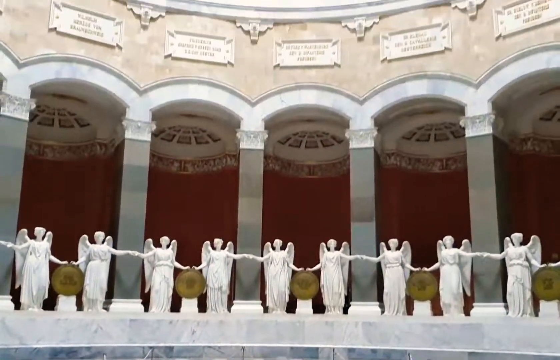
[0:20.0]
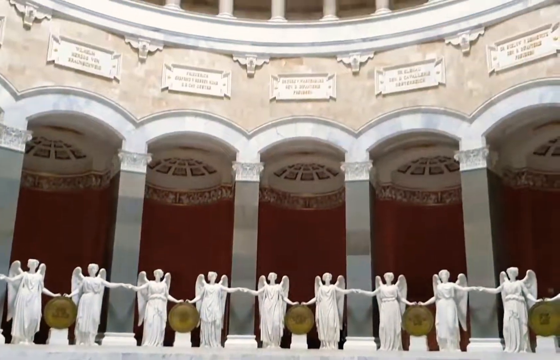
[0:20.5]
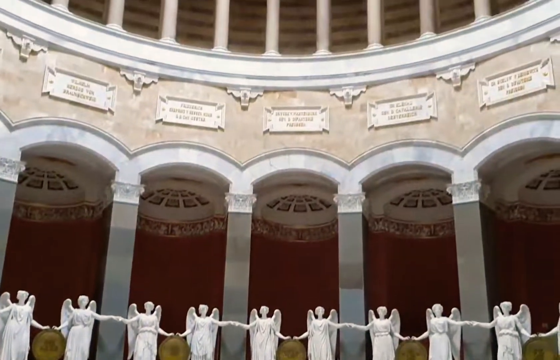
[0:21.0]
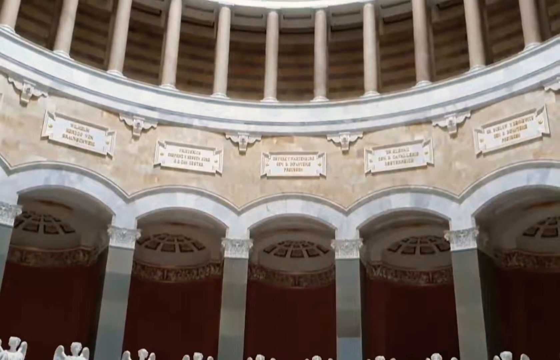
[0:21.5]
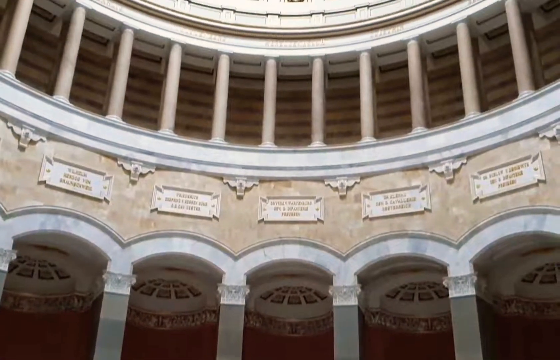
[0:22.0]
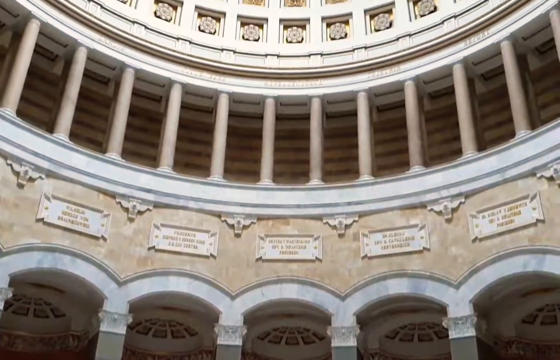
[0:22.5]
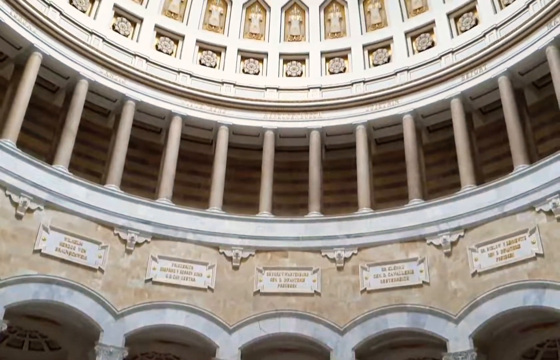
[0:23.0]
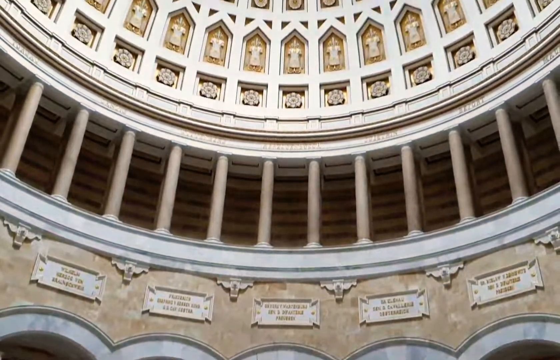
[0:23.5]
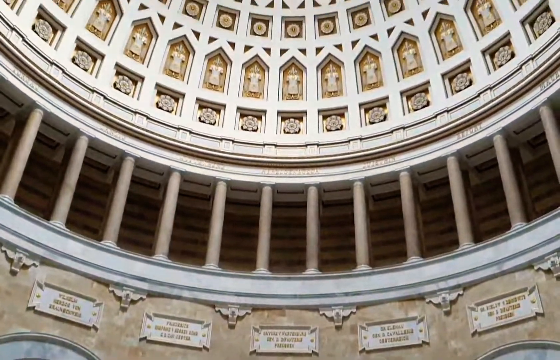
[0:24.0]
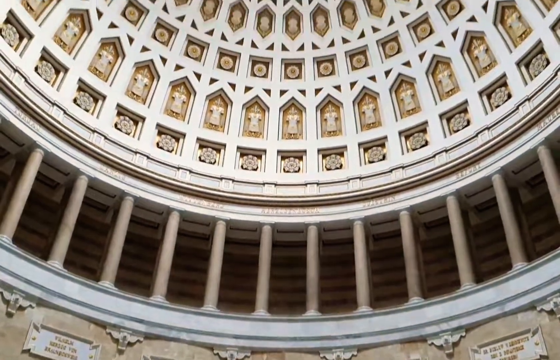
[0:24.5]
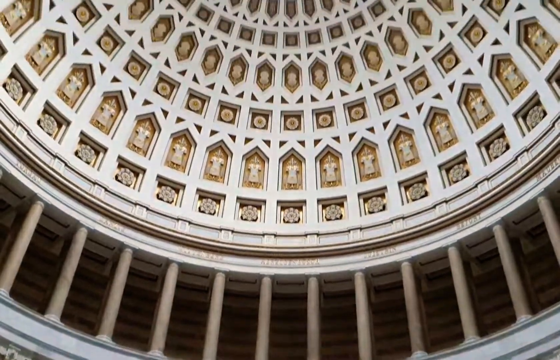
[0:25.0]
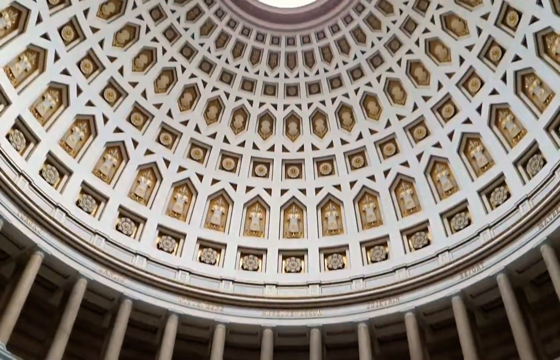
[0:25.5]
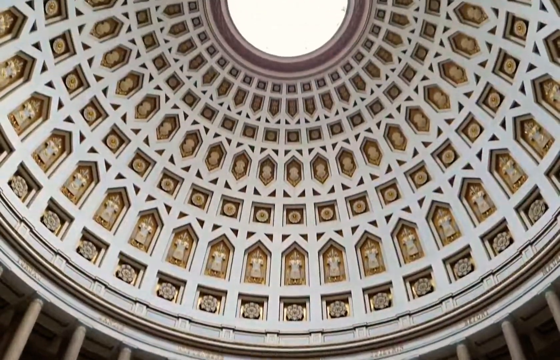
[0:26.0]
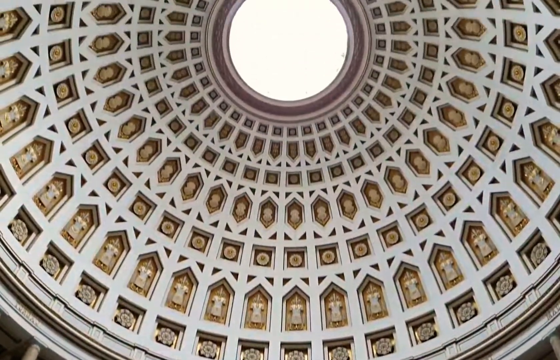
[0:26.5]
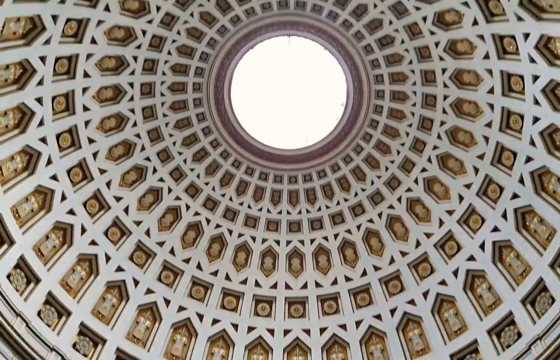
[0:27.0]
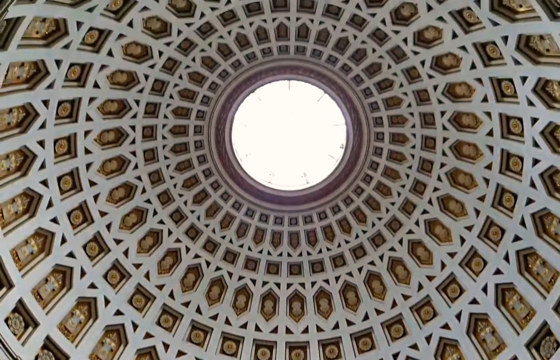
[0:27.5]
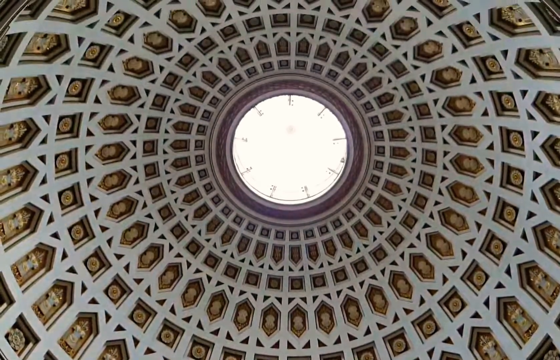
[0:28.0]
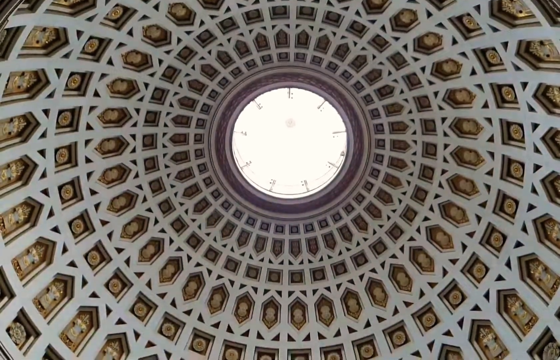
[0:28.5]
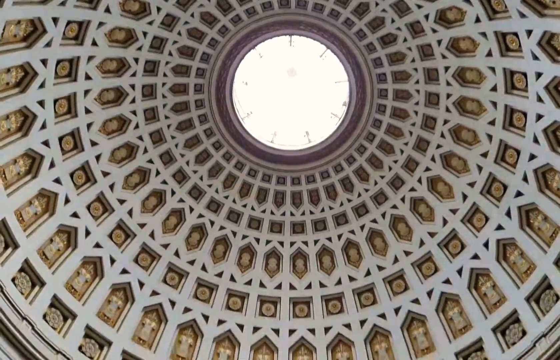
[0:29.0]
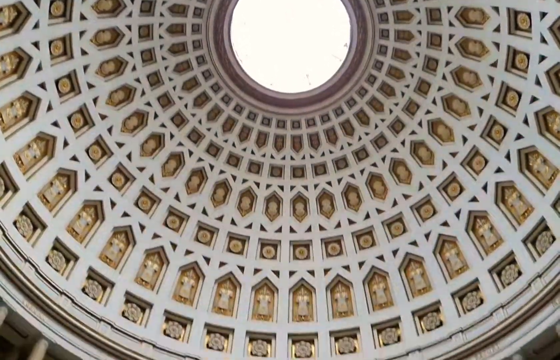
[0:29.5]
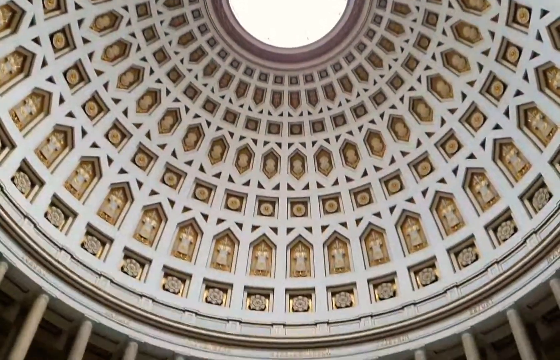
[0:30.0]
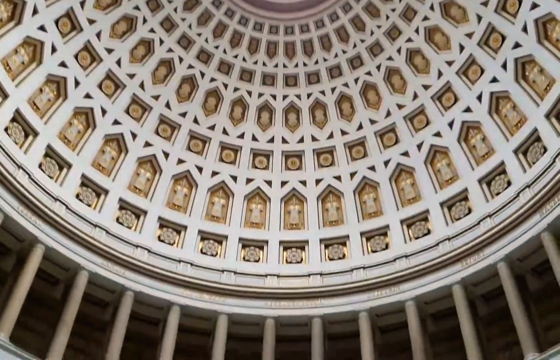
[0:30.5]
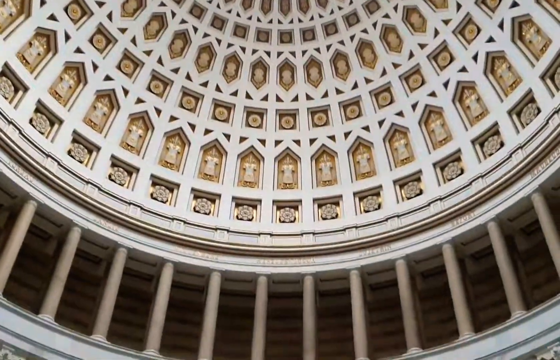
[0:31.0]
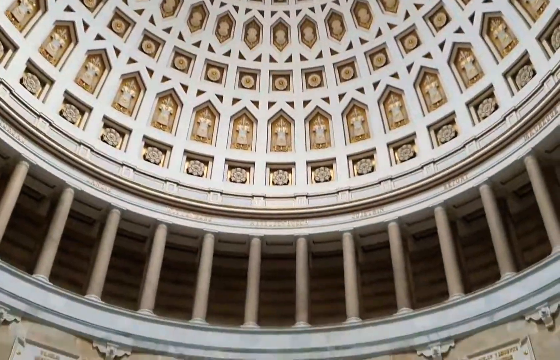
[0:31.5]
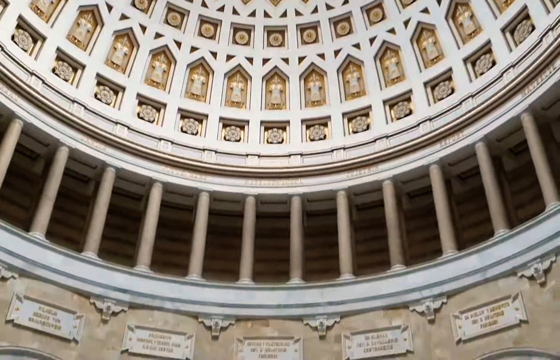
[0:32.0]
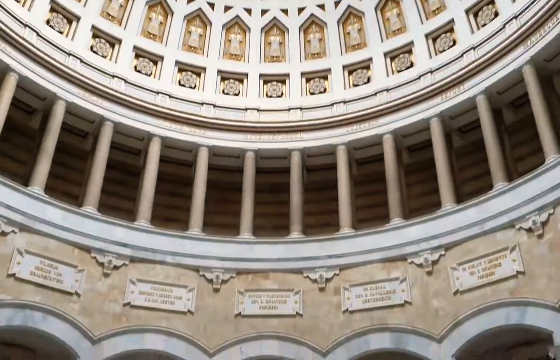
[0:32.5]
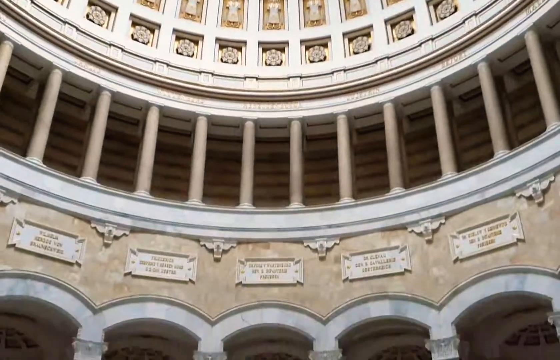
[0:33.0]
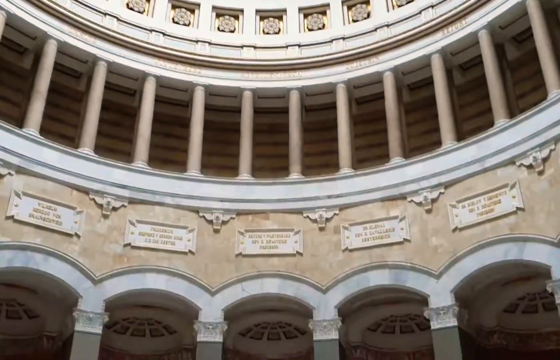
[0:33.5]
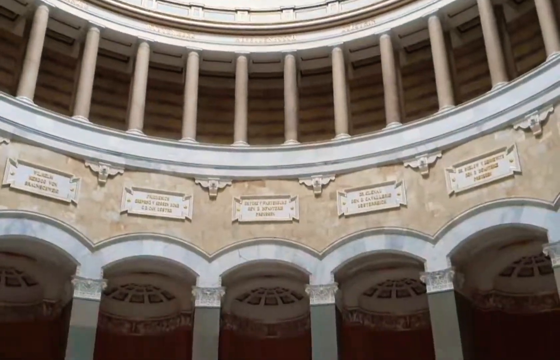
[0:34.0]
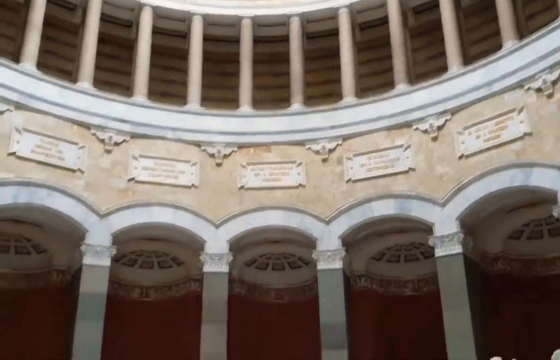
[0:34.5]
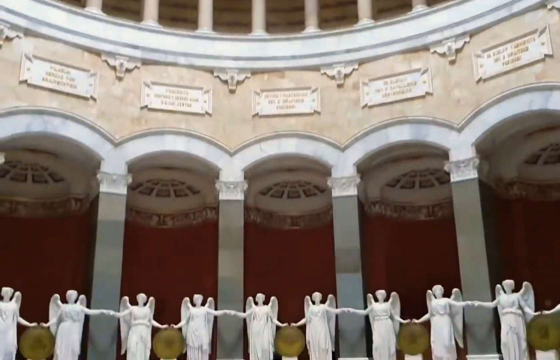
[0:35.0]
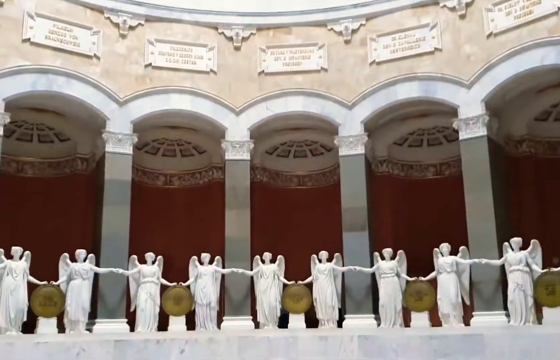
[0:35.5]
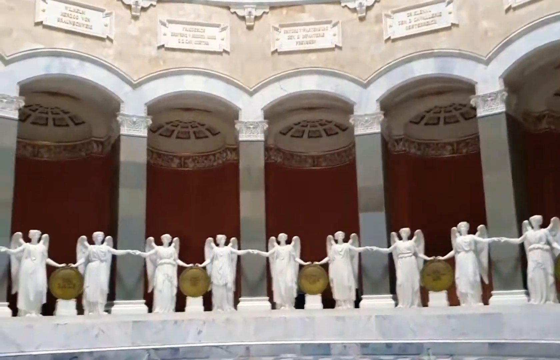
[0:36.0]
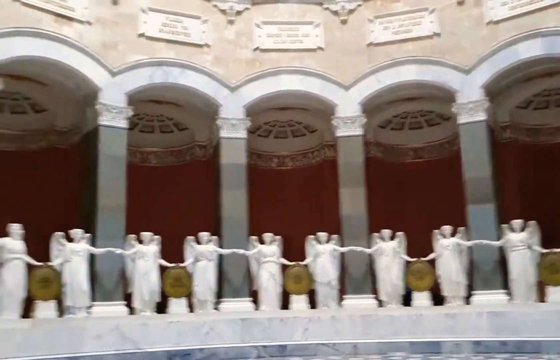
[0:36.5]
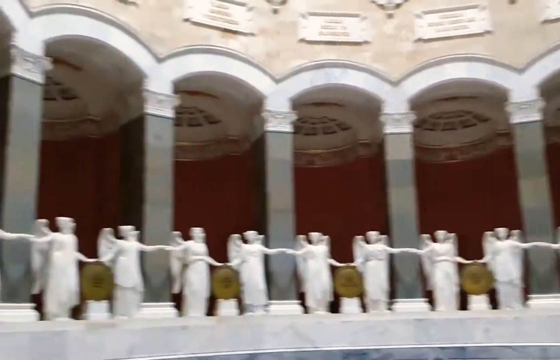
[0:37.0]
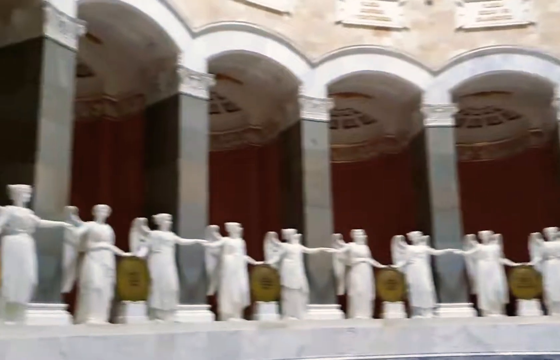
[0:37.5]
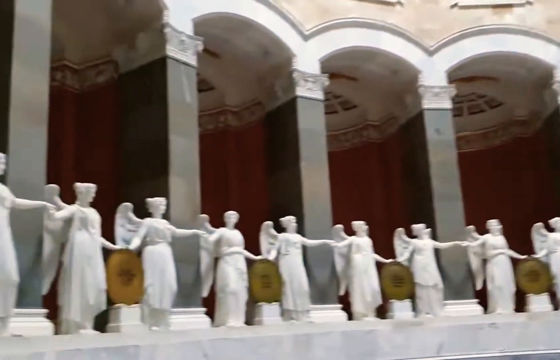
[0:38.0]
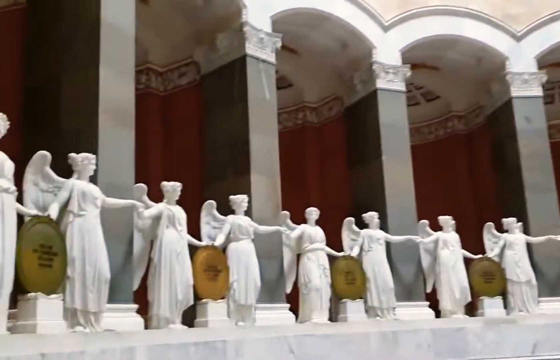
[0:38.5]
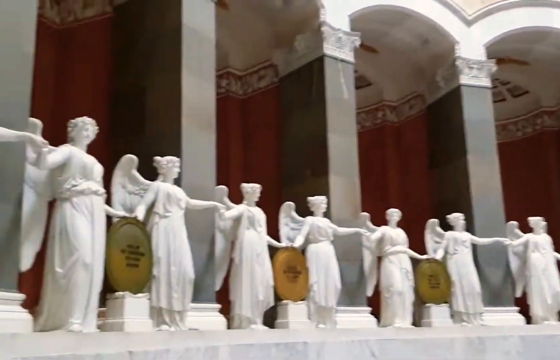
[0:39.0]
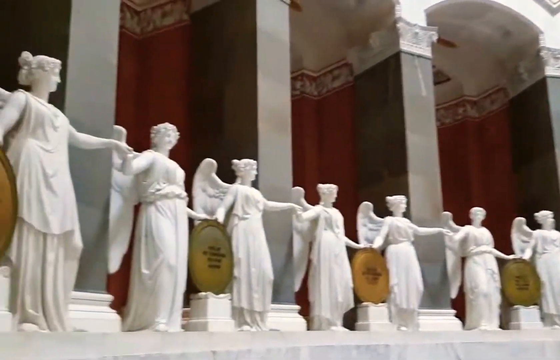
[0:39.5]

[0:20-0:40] The camera pans up toward the inside of the dome, where a circle in the middle looks kind of like a skylight with sun coming through, and the interior is very ornate. There are columns and different layers. At the bottom are the angels holding hands, apparently nine of them, with shields in between them, and arches with large square columns by them. Above is another layer with more traditional columns, and above that a very ornate pattern of different squares and other shapes, kind of a typical Italian or Roman dome interior. Over the arches there are some kind of plaques, a different plaque over each arch above the angels, and that area is a kind of lighter cream color. Above the little pillared area, the inside of the dome has a pattern almost like little concentric circles going around each other, made of shapes that are square, more rectangular with a point at the top, or almost diamond-shaped, in layer after layer. The first row outside the skylight is all squares, followed by a row of a more arrow-like shape, another row of squares, then kind of diamonds, then squares, then the more rectangular shapes with a pointed edge. They all have little statues or designs inside them, on a white background.